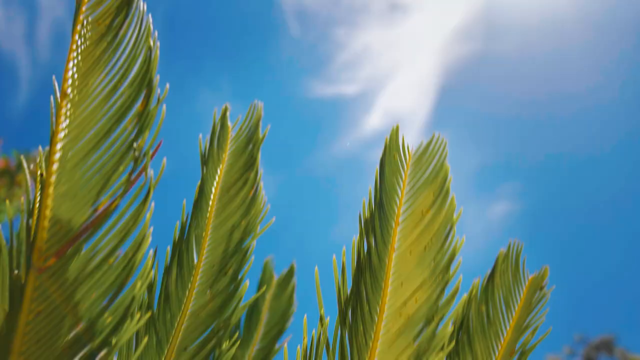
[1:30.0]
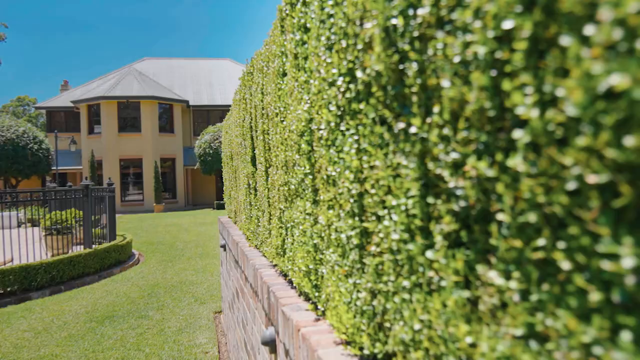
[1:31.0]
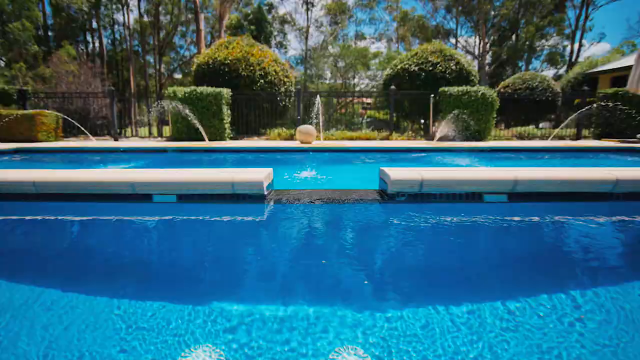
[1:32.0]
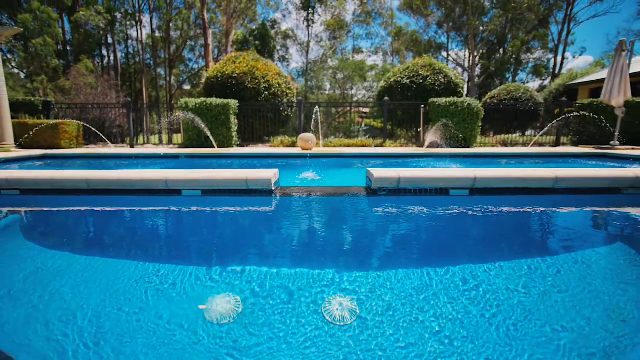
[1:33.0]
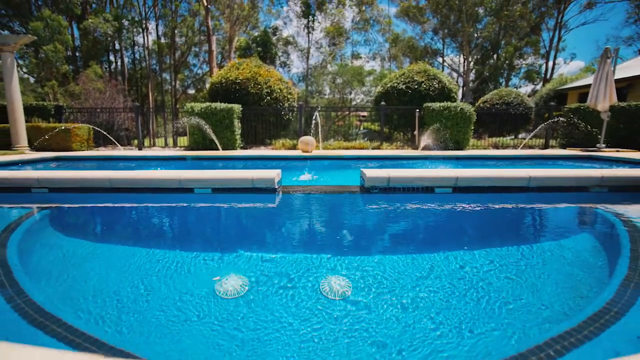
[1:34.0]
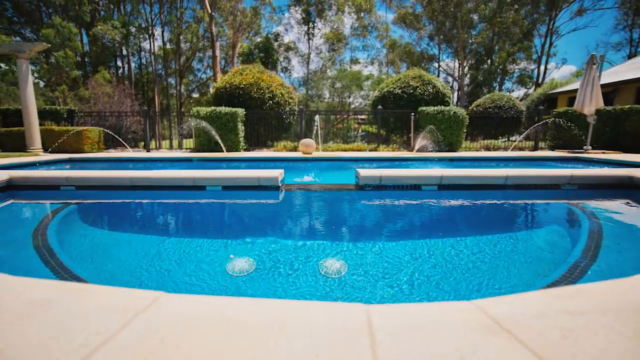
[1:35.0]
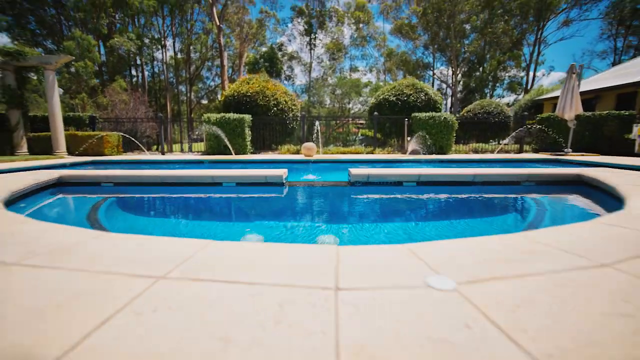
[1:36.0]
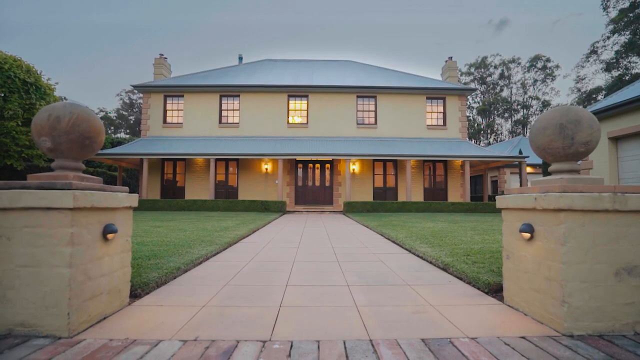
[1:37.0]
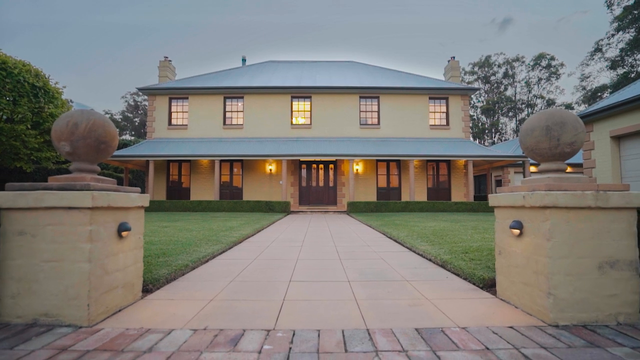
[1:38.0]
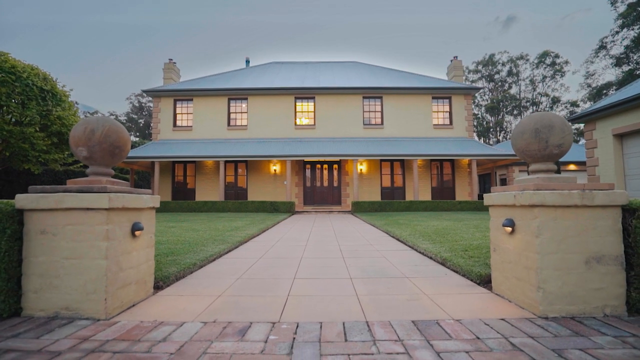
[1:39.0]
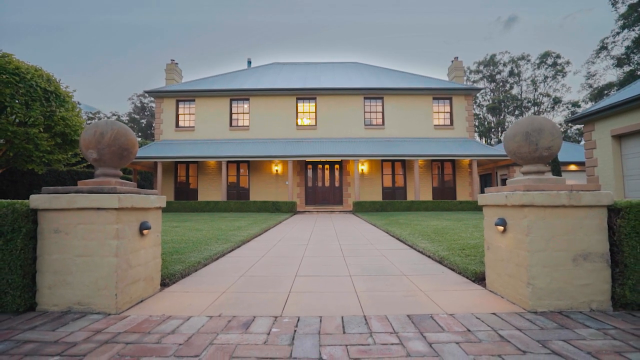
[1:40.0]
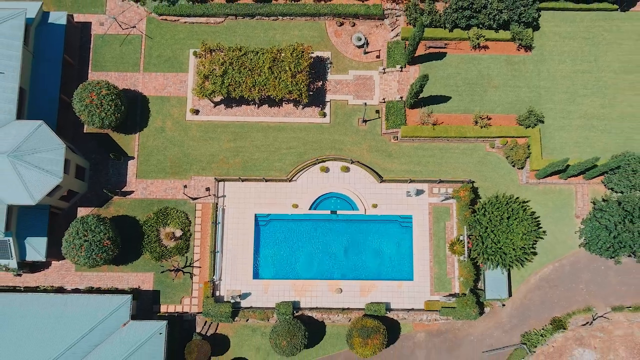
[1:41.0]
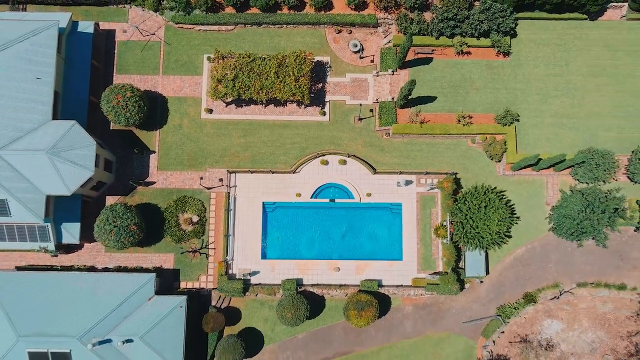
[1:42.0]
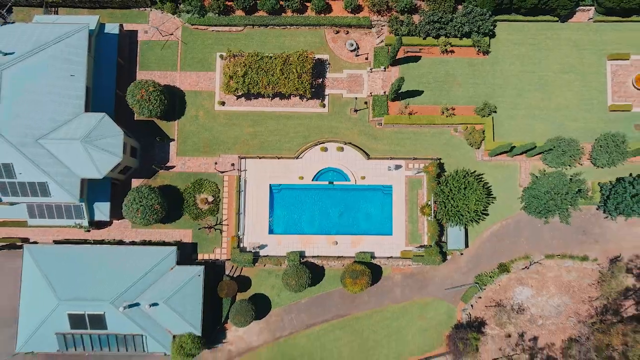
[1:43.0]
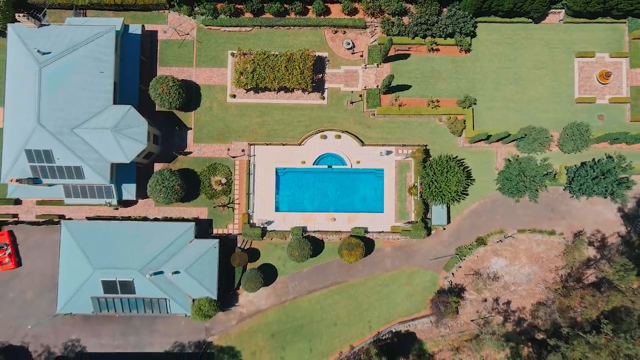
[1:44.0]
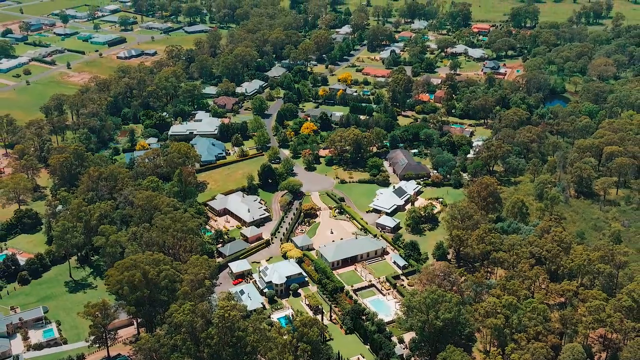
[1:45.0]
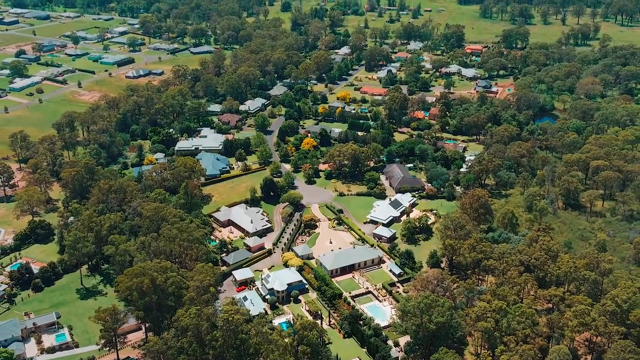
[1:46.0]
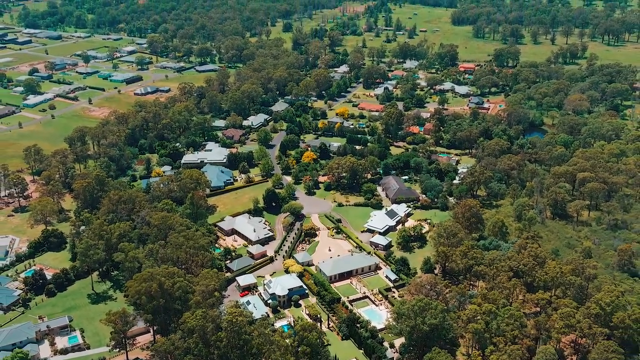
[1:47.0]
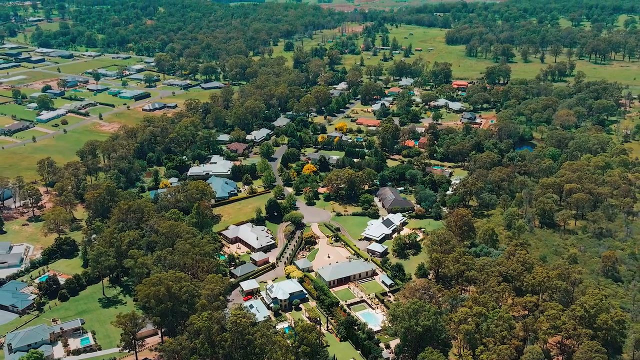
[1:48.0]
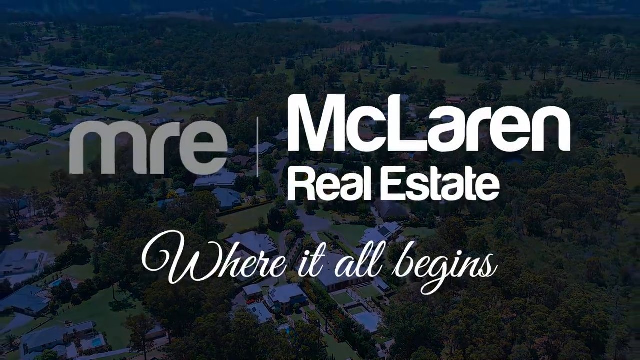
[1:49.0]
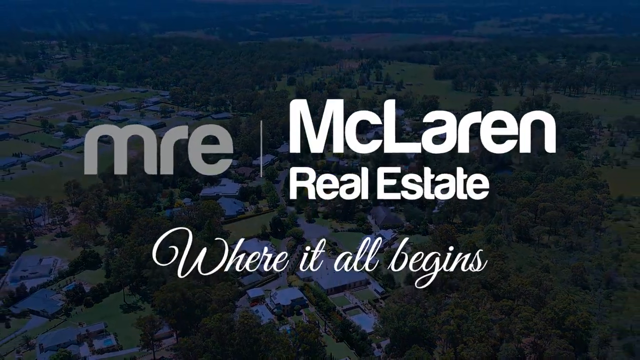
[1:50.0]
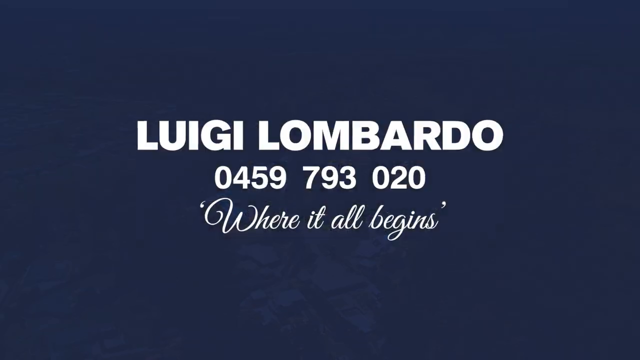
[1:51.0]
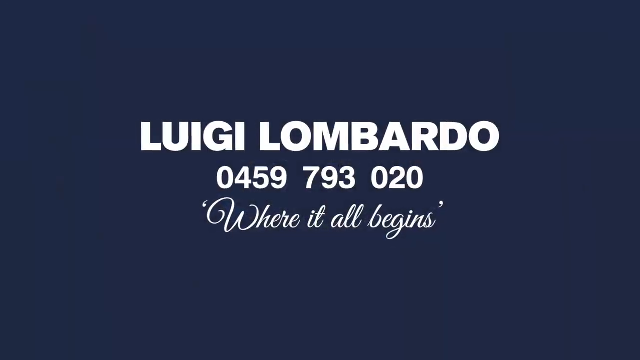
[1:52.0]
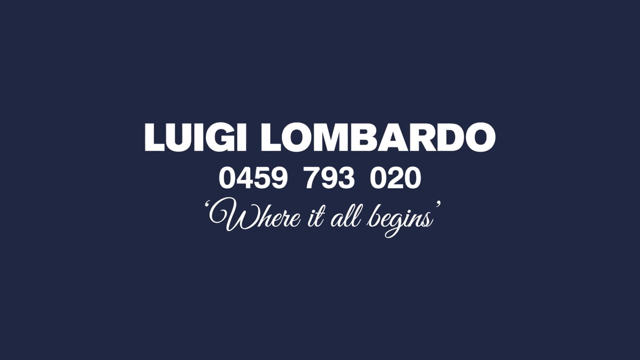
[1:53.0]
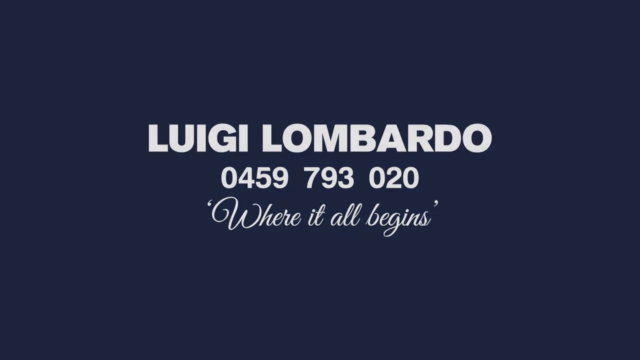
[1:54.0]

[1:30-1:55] The pool seen earlier appears from a different angle, starting with the baby pool, and then the video quickly pans to other shots of the home, including the front of the home and the entryway again. An overview shot zooms out from the pool, followed by an overview of the whole neighborhood. The neighborhood is spacious, with many homes that are not on top of each other and a lot of land between them. The home styles look somewhat similar, as if following a theme, and there are many trees and a lot of greenery. Far in the distance there appears to be some elevation, possibly a hilly area. The video ends with credits, maybe for a real estate agent.